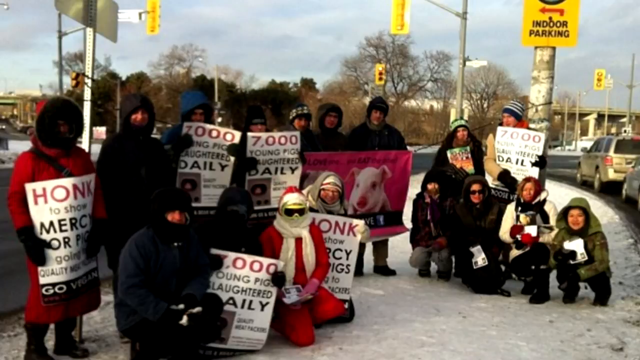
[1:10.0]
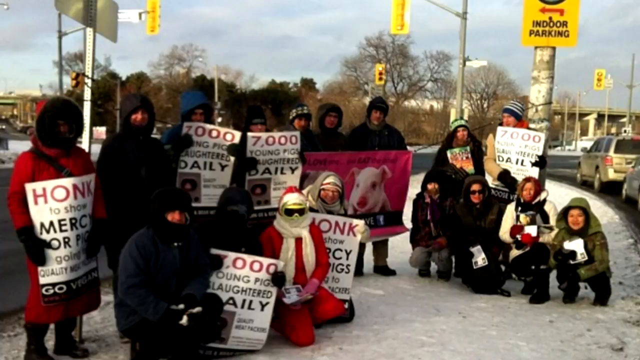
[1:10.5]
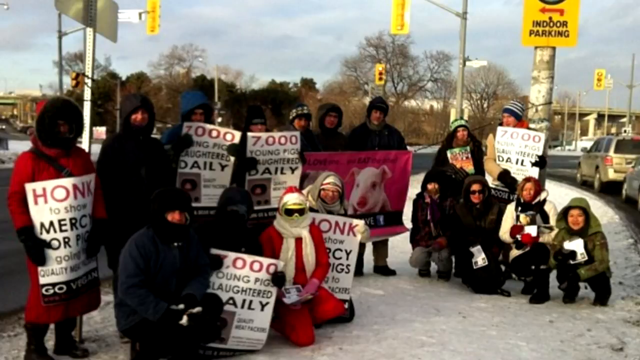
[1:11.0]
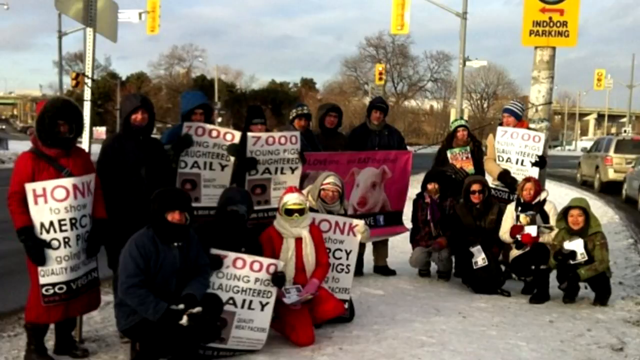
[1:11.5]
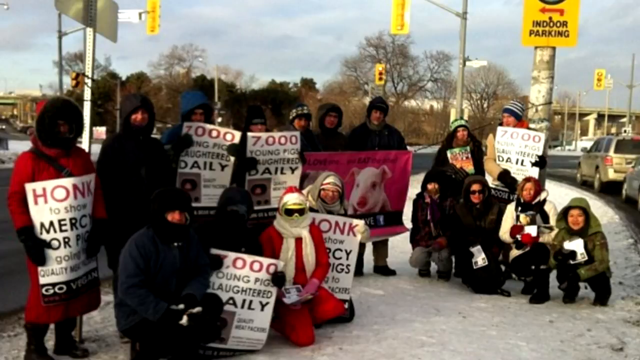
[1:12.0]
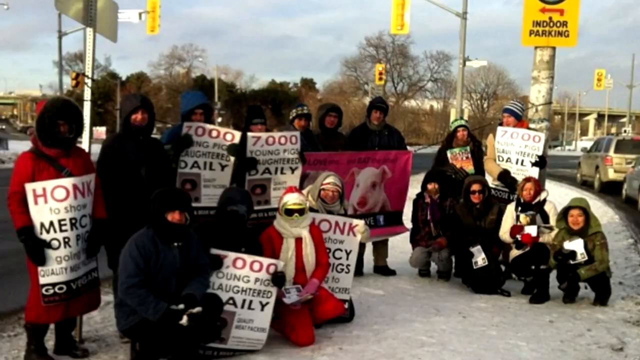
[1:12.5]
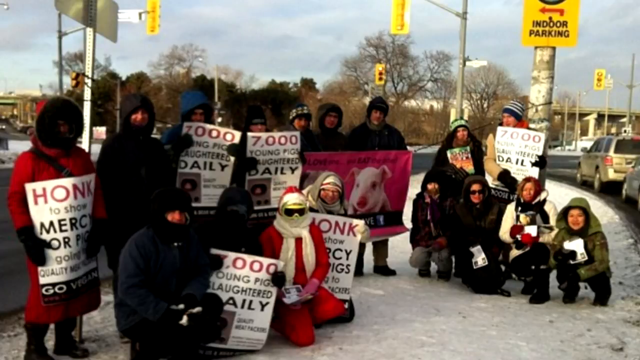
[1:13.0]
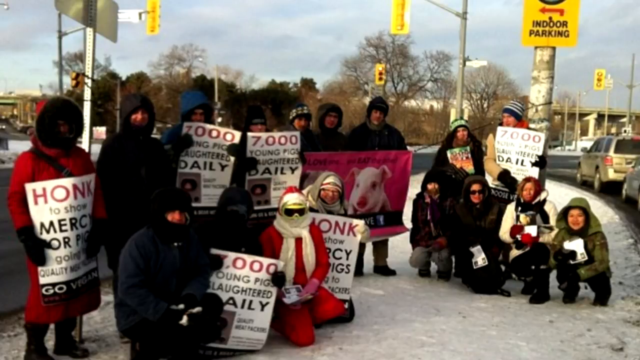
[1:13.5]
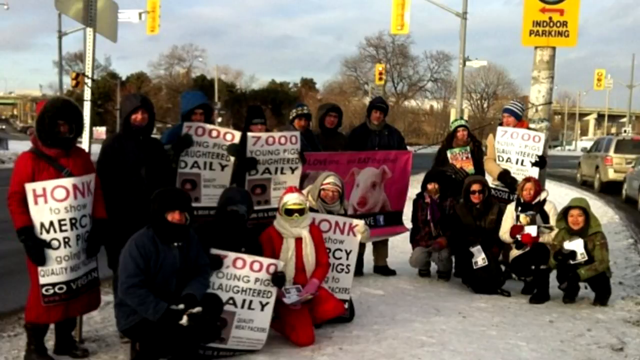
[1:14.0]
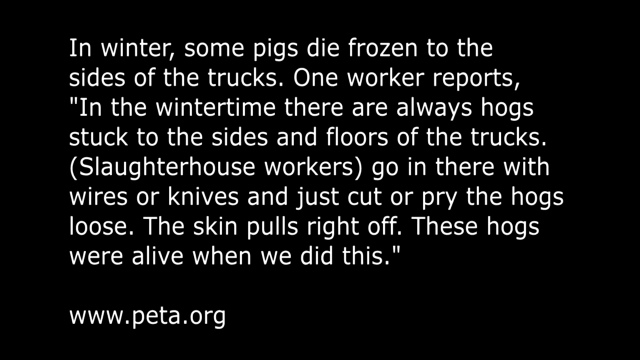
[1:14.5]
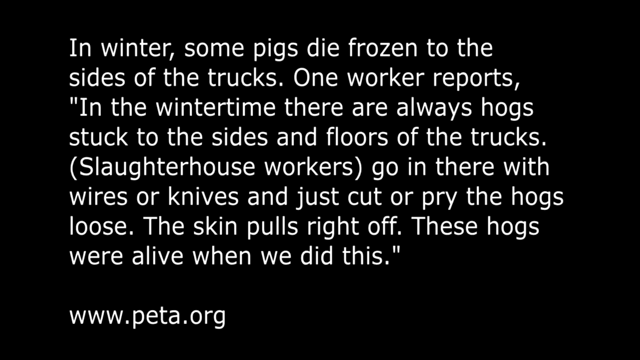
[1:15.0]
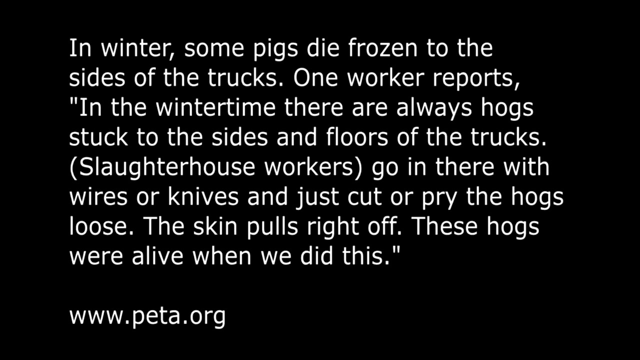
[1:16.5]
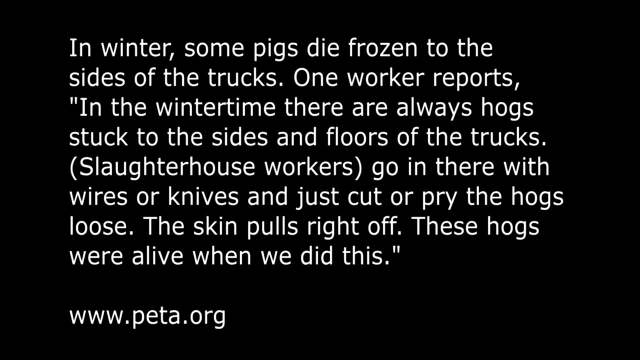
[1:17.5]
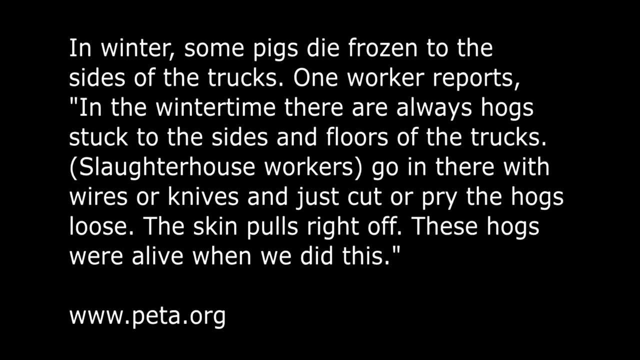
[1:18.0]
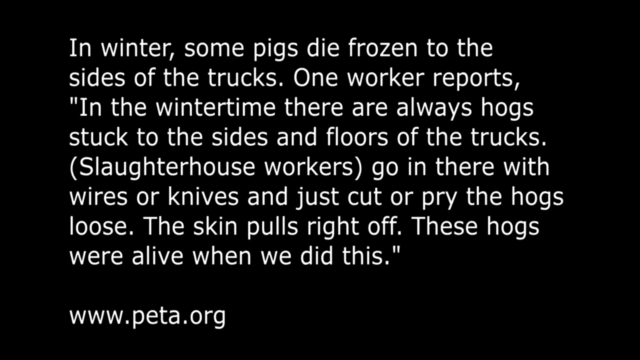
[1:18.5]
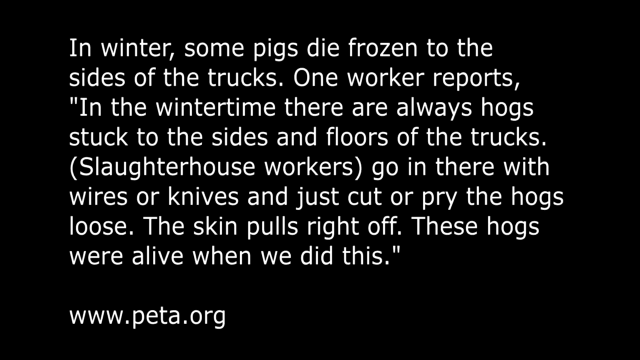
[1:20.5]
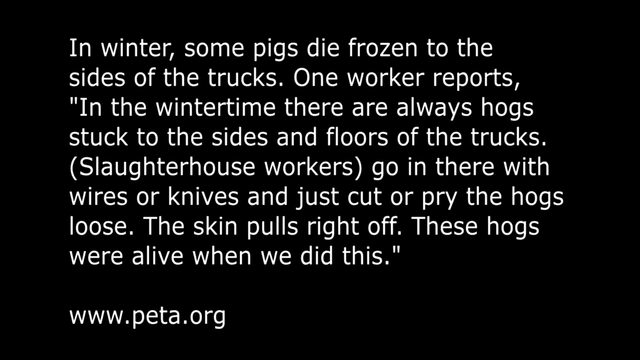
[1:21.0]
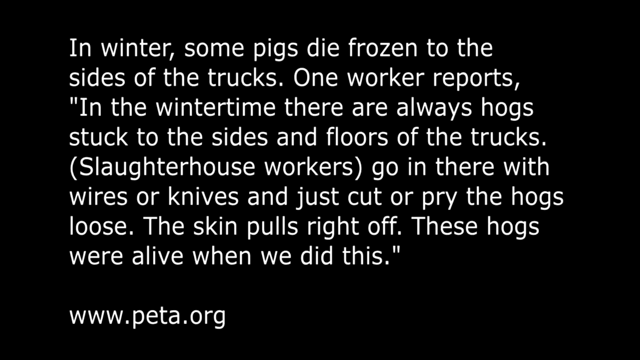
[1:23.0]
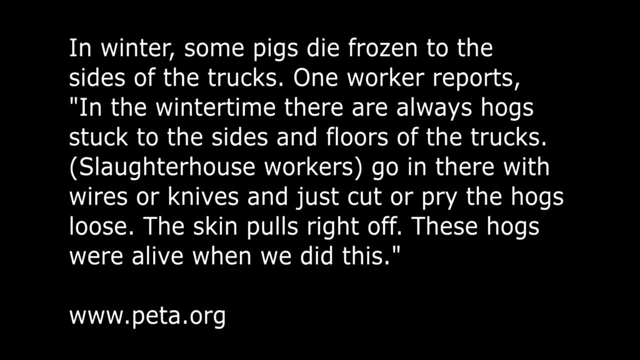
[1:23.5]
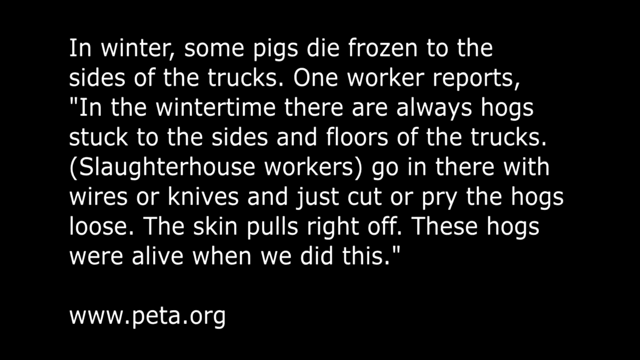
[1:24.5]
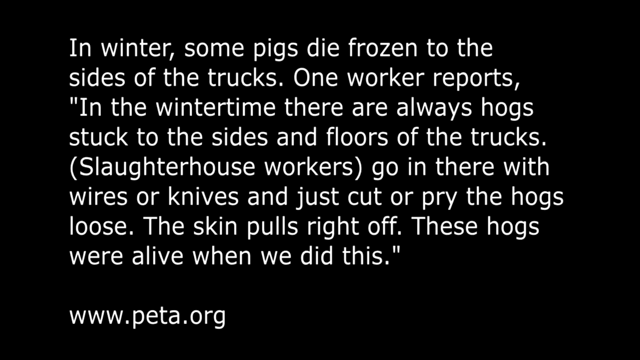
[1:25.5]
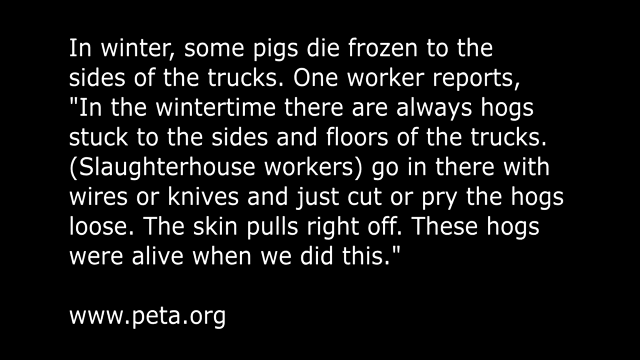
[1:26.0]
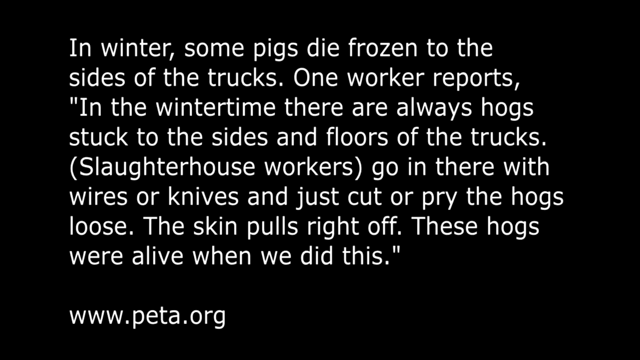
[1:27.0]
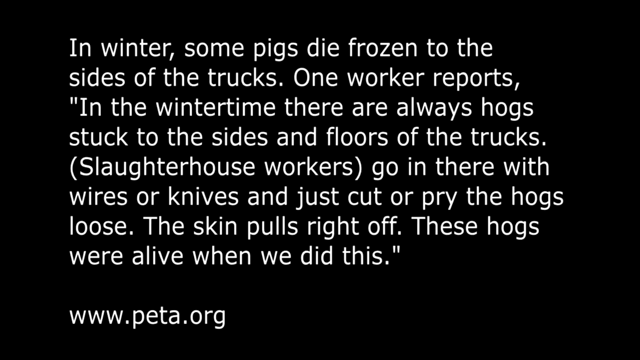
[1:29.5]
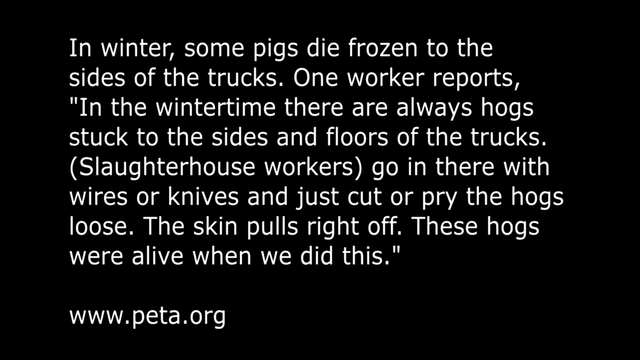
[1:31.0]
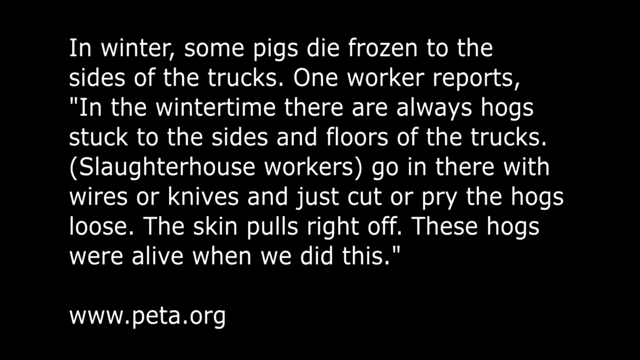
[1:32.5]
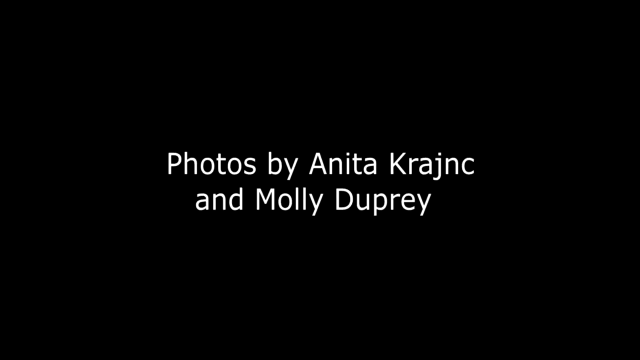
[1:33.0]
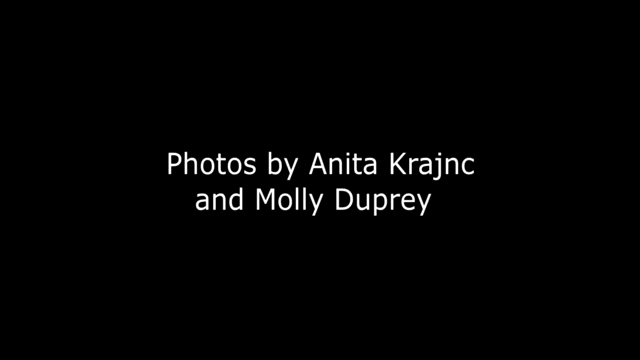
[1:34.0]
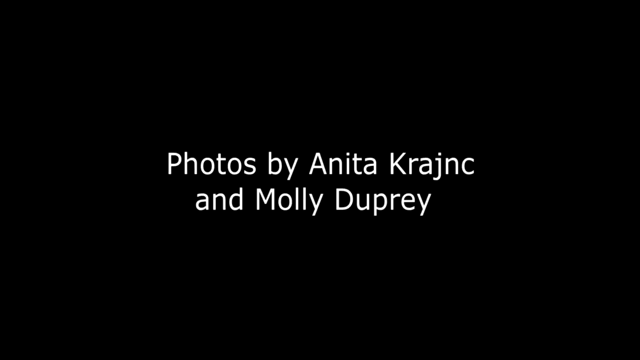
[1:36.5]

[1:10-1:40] Many other people hold different placards in support of the pigs. Text appears reading "in the winter some pigs die frozen to the sides of the trucks one worker reports in the winter time there are always hogs stuck to the sides and floors of the truck slaughterhouse worker go in there with wires and knives and just cut or pry the hogs loose the skin pulls right off these hogs were alive when we did this www.peta.org". Then many more people appear holding placards, protesting against the treatment of the pigs, followed by the text "photos by anita crunch and molly dupree". One placard reads "why love one and eat the other" with a picture of a dog and a pig; another reads "why love one and save the other"; another person holds a placard reading "why love one but eat the other, choose vegan".